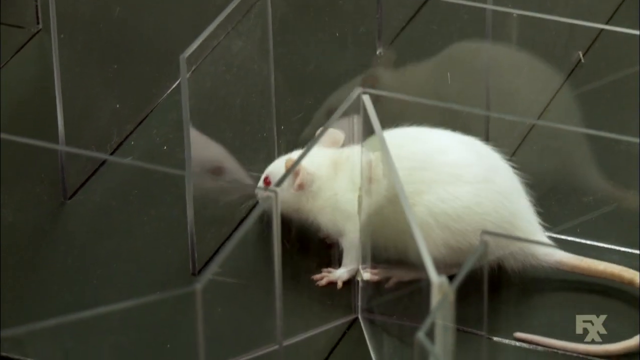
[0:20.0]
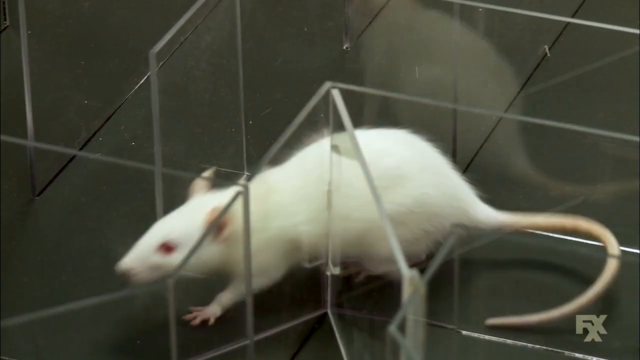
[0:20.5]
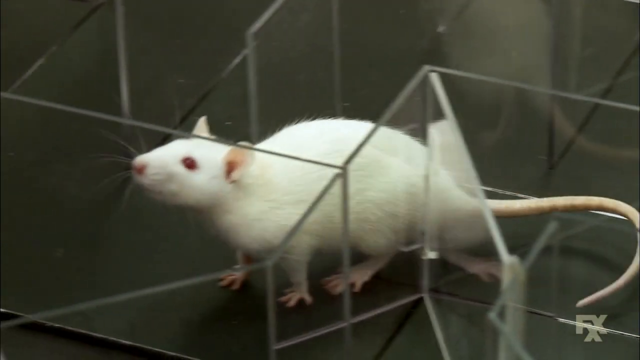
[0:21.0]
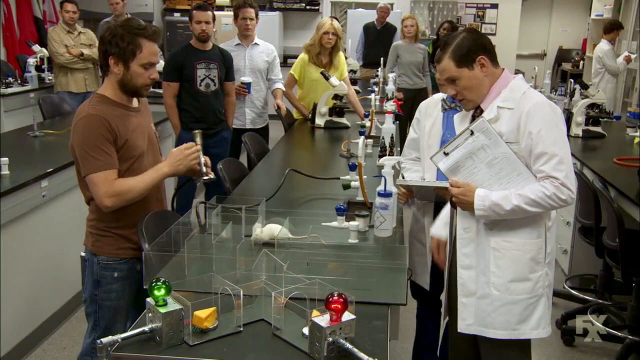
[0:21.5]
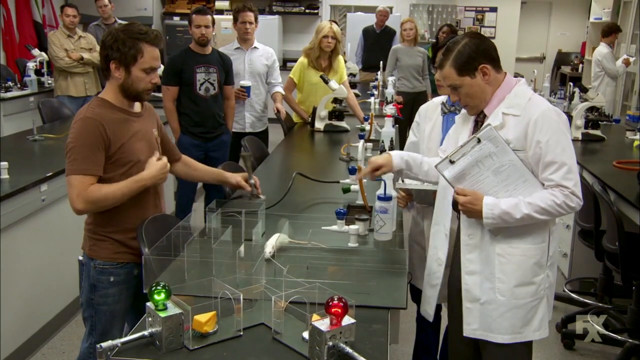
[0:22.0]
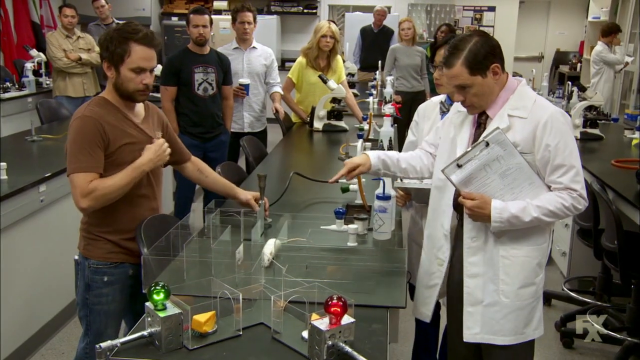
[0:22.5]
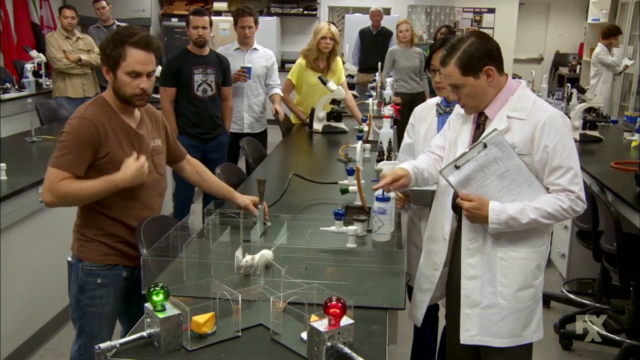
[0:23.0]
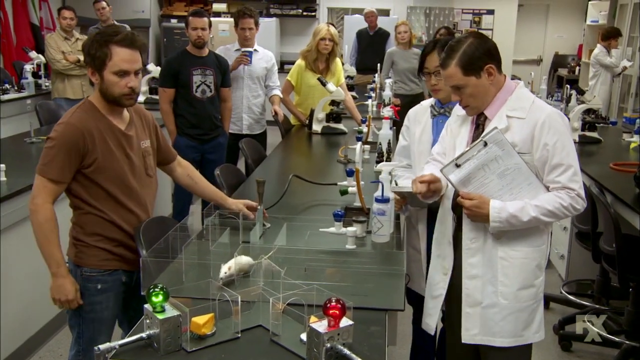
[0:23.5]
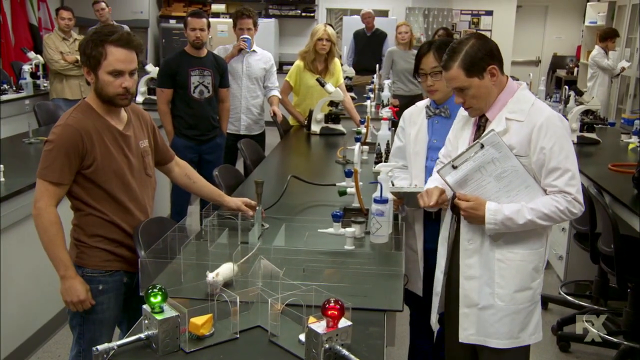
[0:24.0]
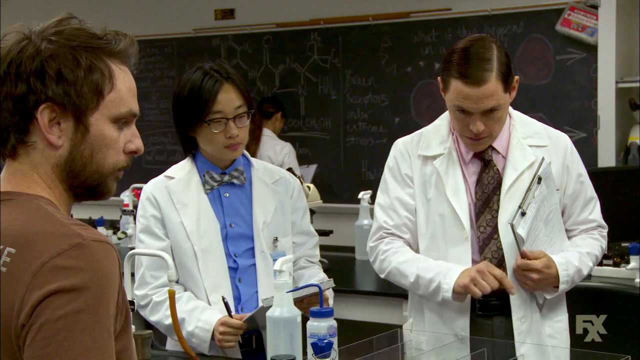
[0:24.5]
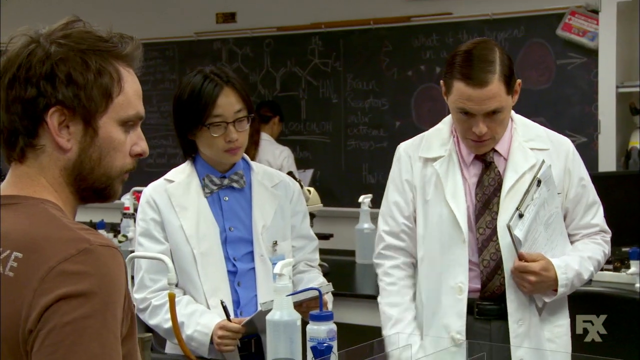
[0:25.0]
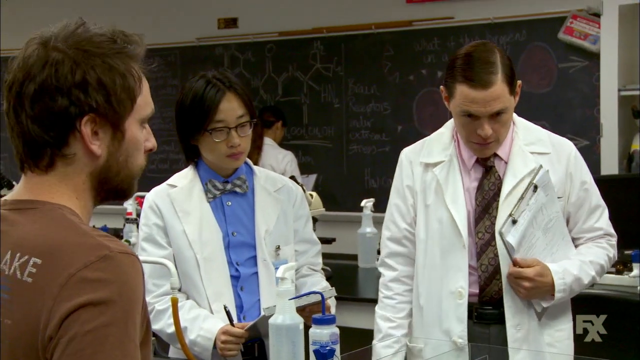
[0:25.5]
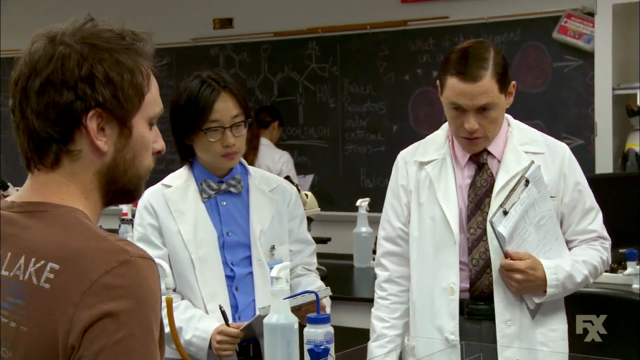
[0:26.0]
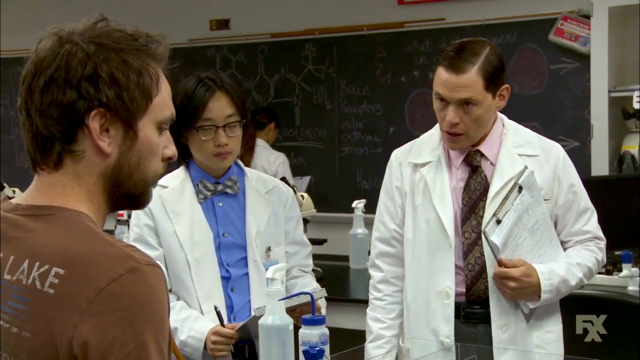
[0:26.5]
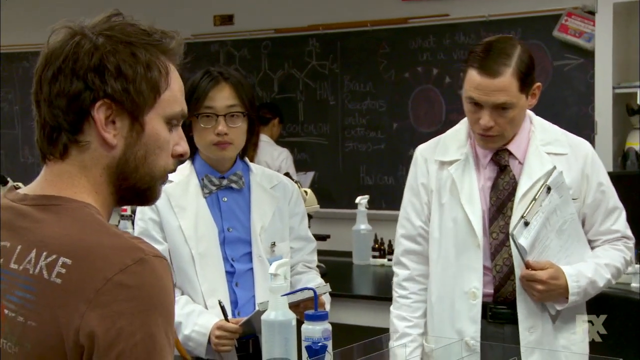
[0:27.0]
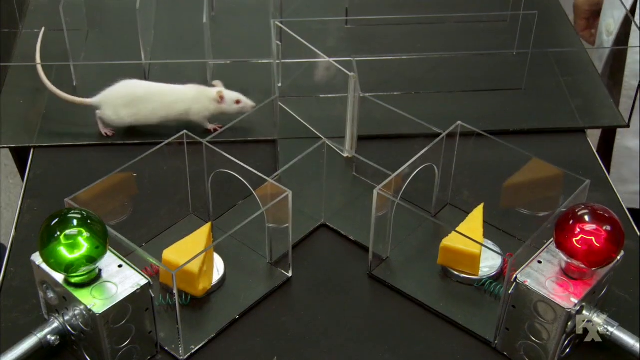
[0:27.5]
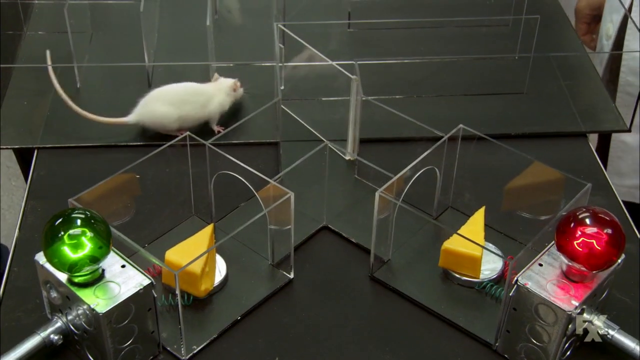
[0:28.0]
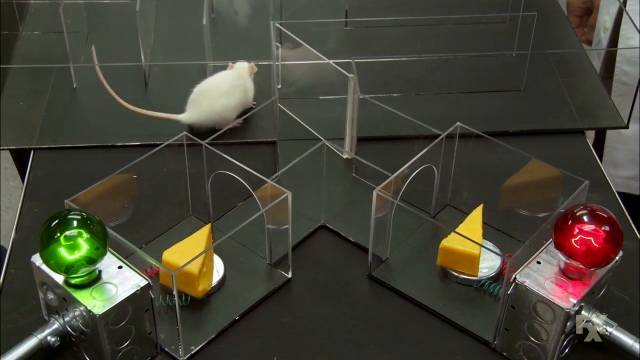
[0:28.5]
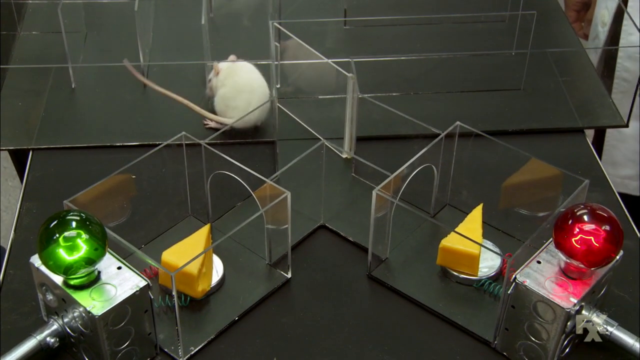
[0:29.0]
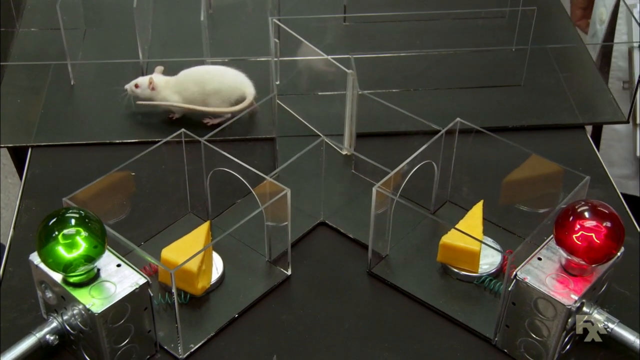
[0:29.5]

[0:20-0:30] The mouse, which has a long tail, sniffs around and moves between plastic pieces. A wide view shows everybody in the classroom, with the man in the lab coat pointing at the mouse, the clipboard still in his left hand and tucked in his elbow. The man on the left in the brown shirt grips his shirt with his right hand, sets down the device with his left, and looks at the mouse. The two men in lab coats are shown; the man with the clipboard looks down while talking, then looks up at the man. The shot cuts to the mouse sniffing around between the different openings in the plastic.